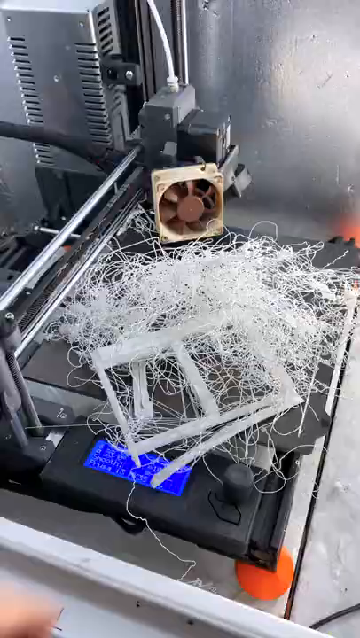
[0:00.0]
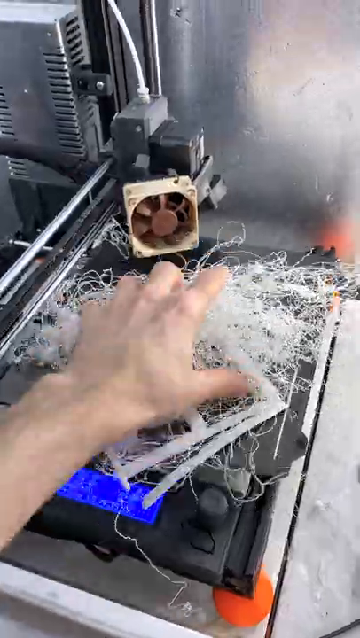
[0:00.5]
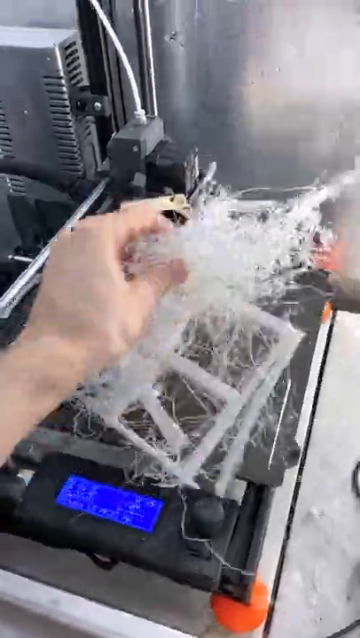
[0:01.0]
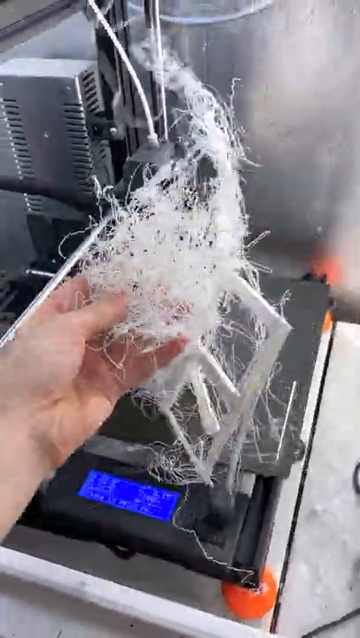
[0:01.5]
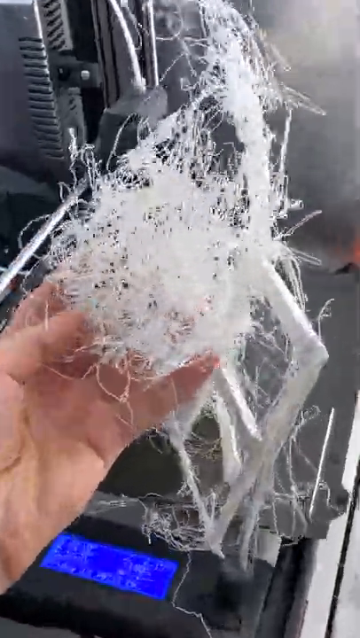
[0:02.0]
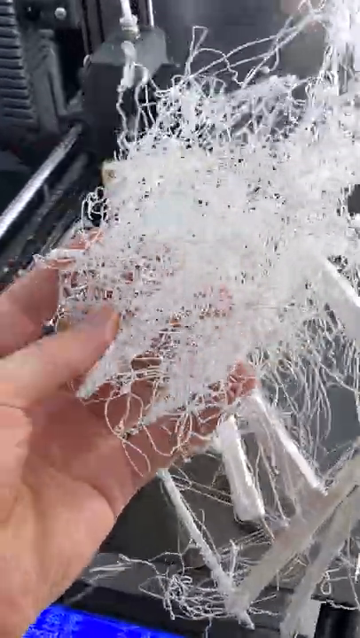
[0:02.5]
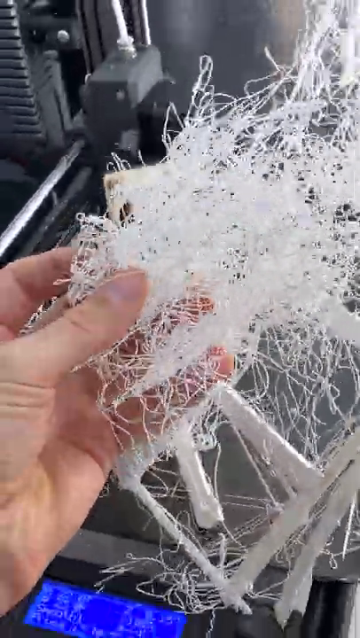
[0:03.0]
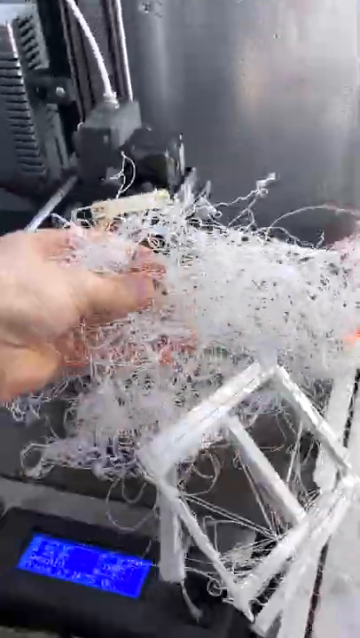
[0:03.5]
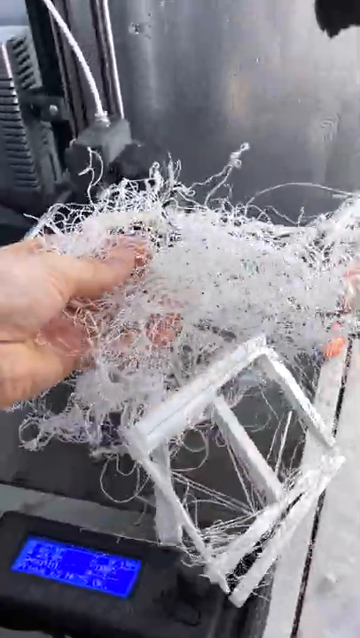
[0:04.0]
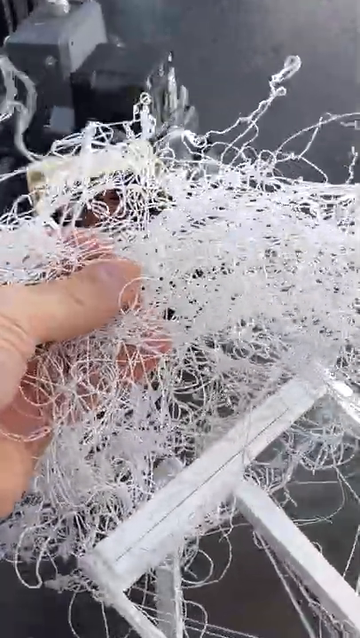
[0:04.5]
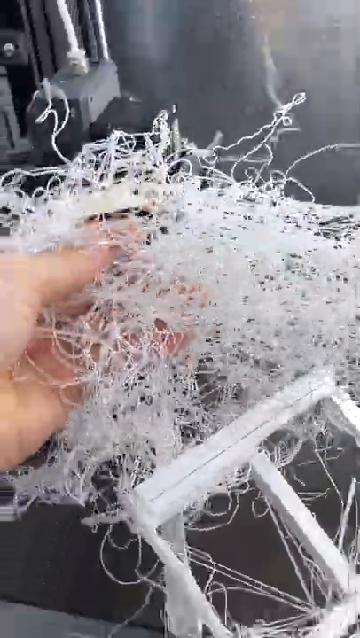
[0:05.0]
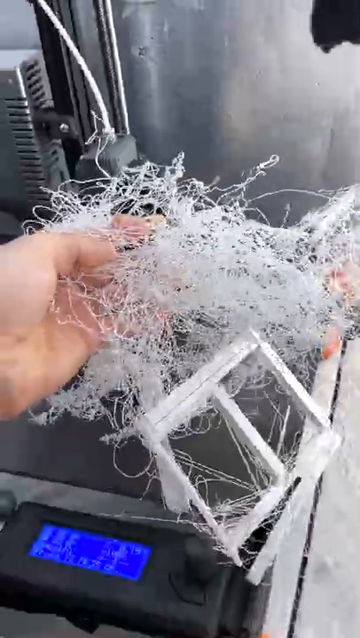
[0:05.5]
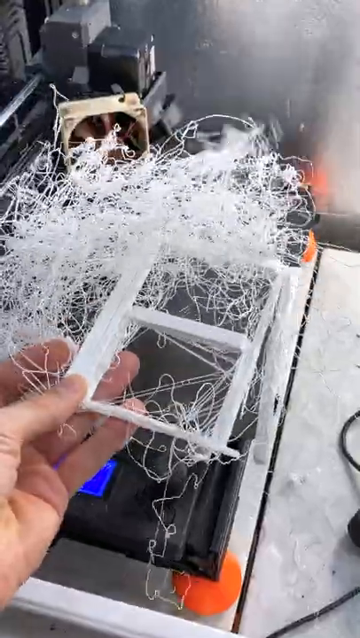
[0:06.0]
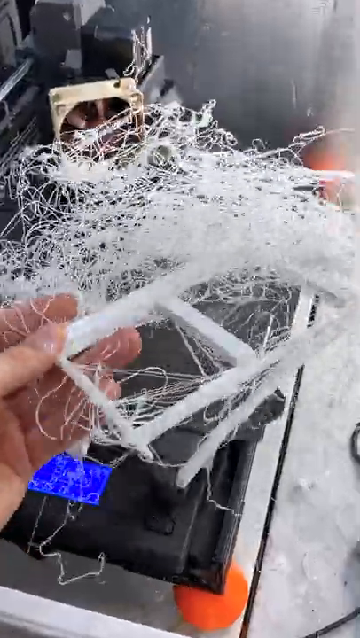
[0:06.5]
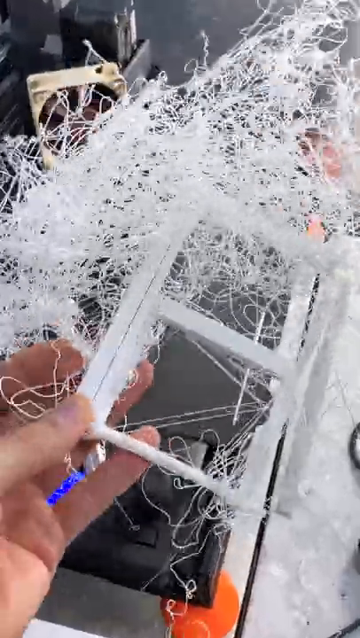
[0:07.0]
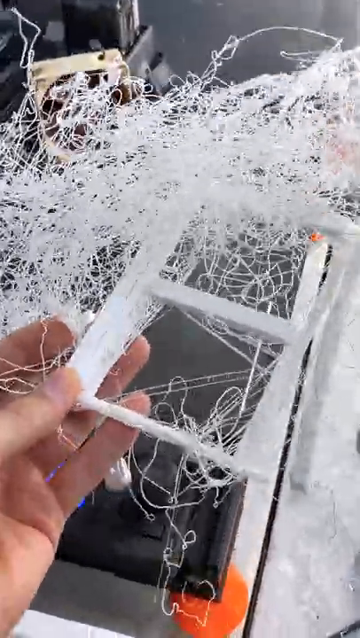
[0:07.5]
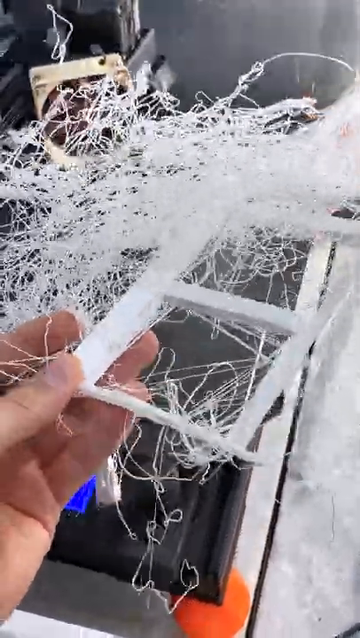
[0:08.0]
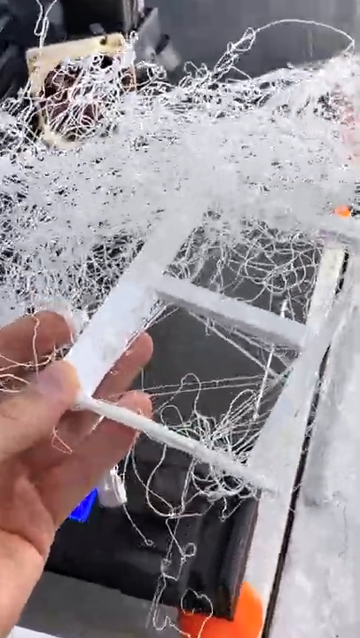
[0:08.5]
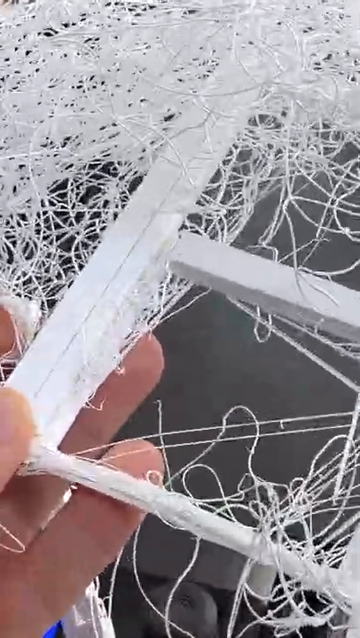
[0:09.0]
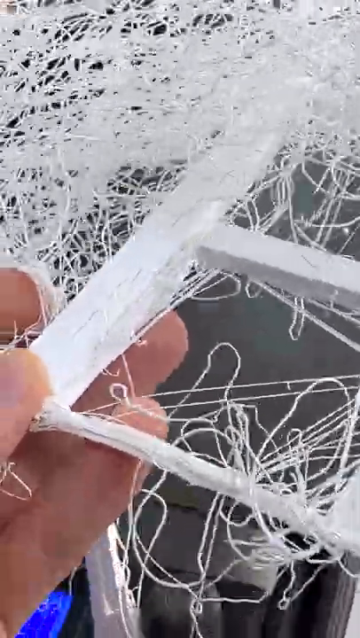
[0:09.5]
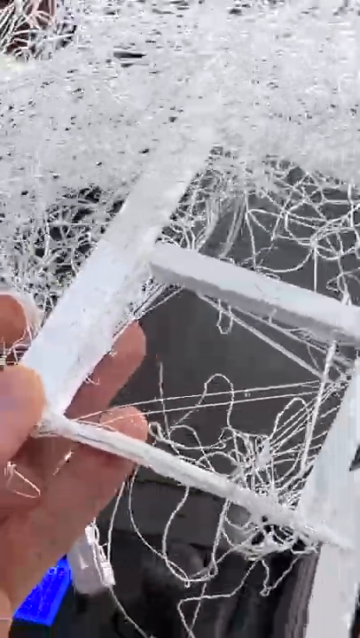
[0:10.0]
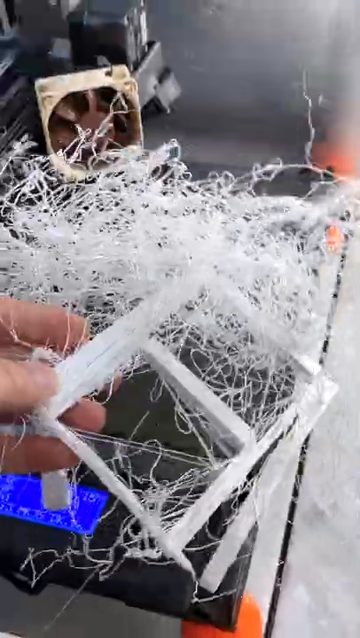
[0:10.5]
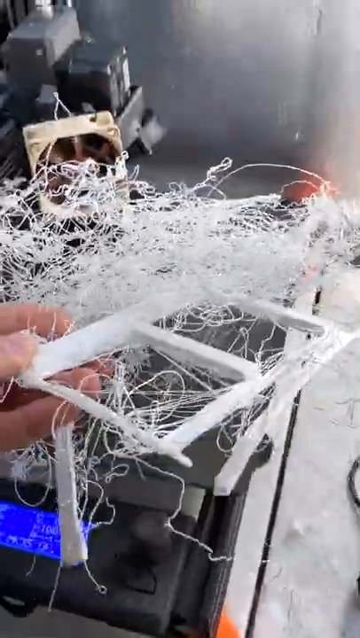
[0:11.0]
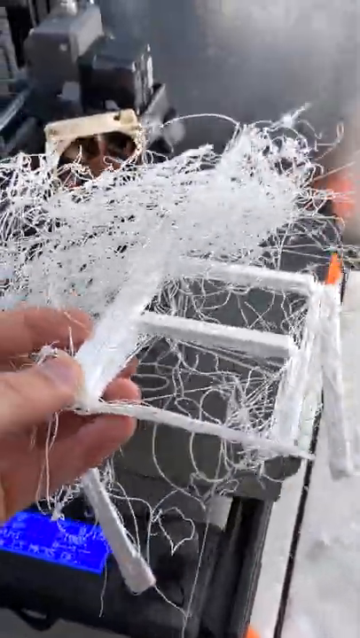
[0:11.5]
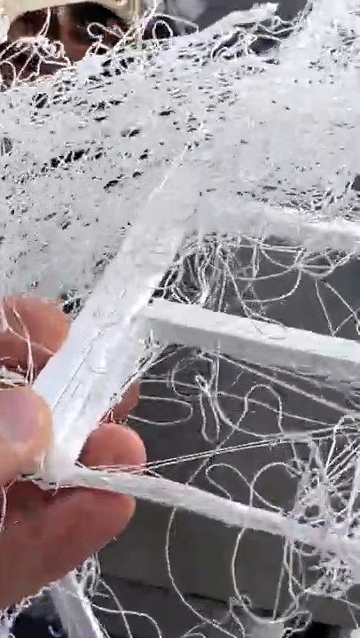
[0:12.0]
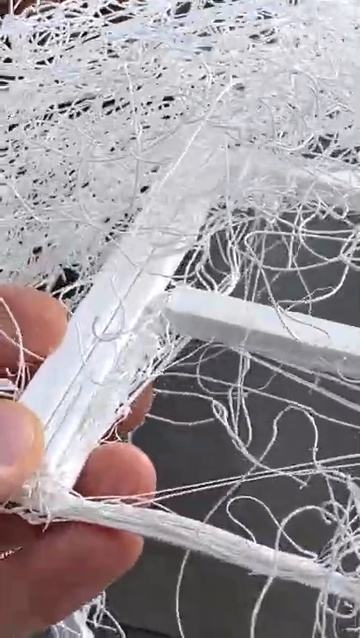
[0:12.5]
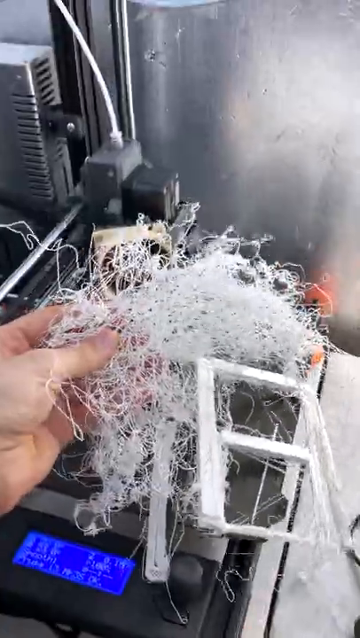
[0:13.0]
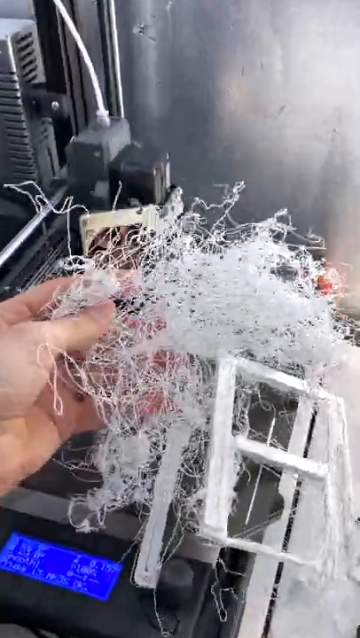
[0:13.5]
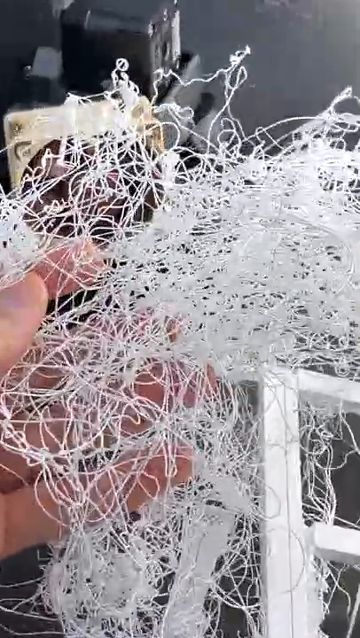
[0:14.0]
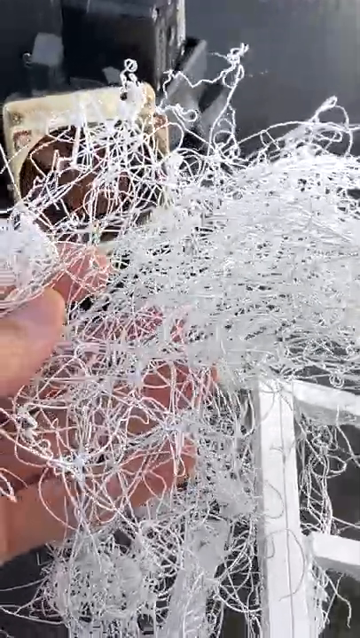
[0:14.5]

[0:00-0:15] What appears to be a 3D printing attempt is shown. A Caucasian hand seems to come in on the left side of the screen, holding a plastic piece with really fine, spaghetti-looking filaments. Something appears to have gone wrong in the process: the little spaghetti filaments come out of a sort of white plastic frame, almost as if they have exploded and semi-melted. The setting looks like an office or something kind of industrial, with the 3D print sort of in the foreground. A little bit of a blue window, a kind of display window, is visible on the 3D printer. The camera angle then sort of comes up close, closing in on the white filament to show it more closely. The hand holds the fine filament and sort of shows it from different angles, showing the failed 3D printing attempt.